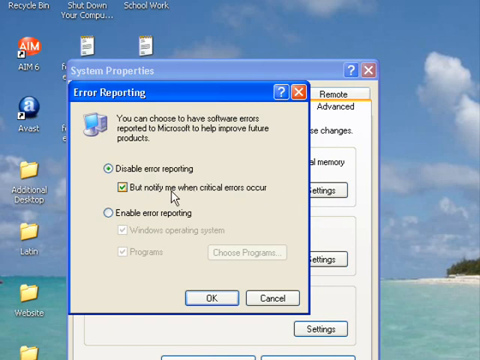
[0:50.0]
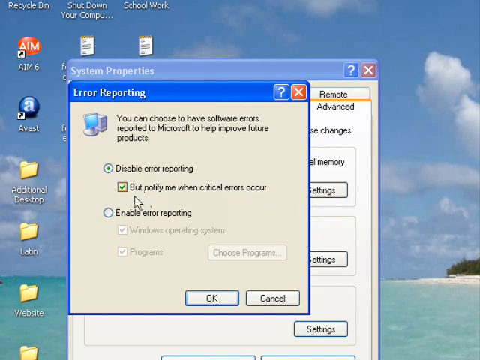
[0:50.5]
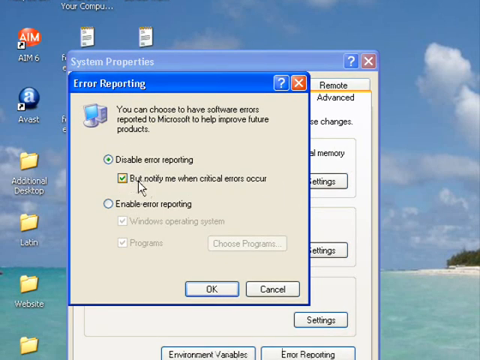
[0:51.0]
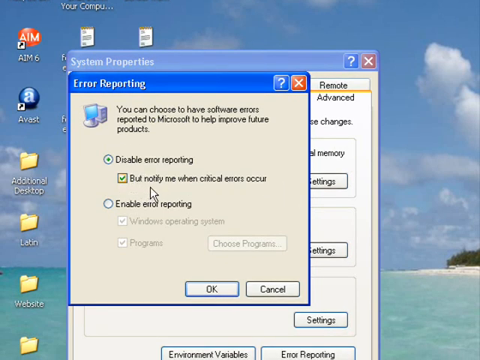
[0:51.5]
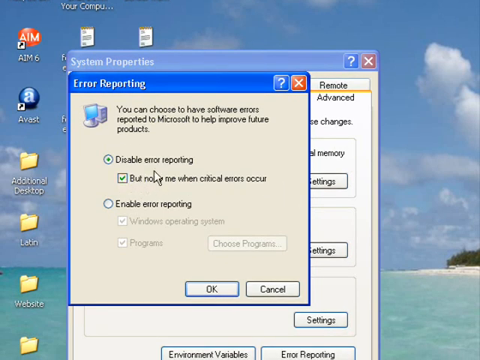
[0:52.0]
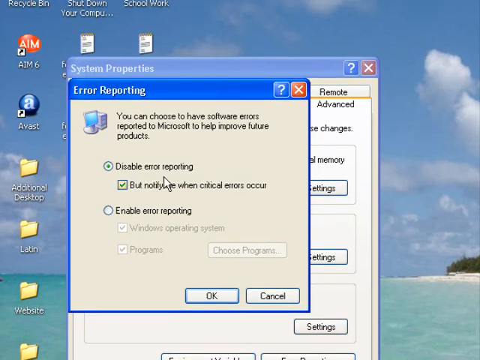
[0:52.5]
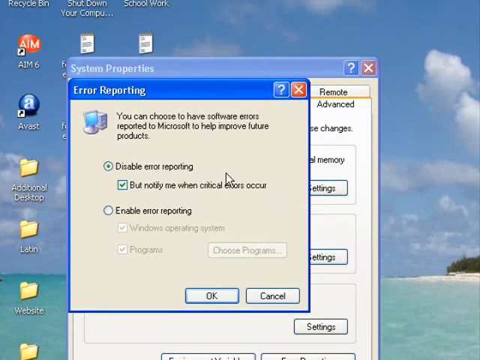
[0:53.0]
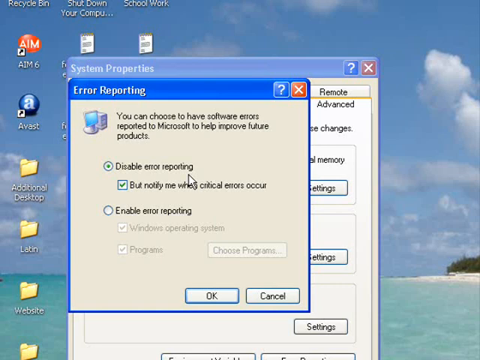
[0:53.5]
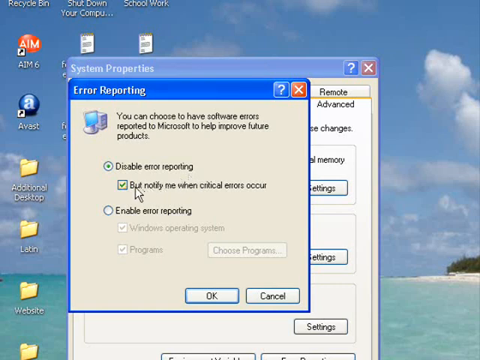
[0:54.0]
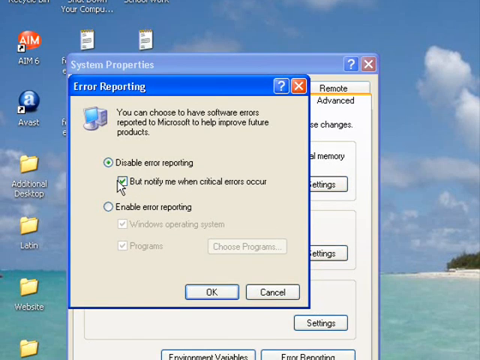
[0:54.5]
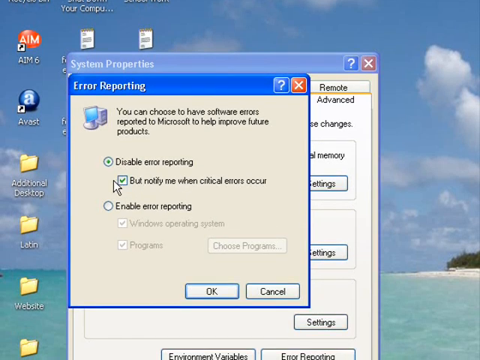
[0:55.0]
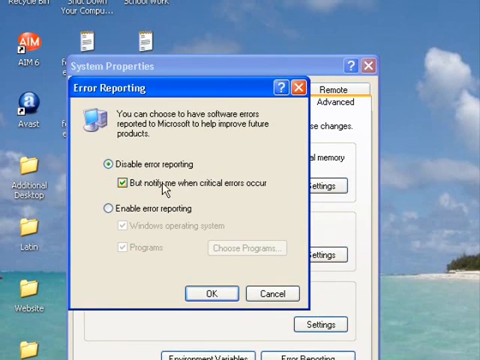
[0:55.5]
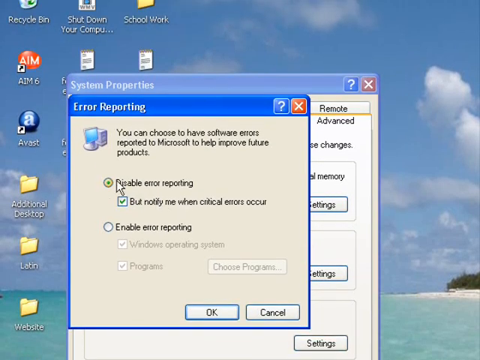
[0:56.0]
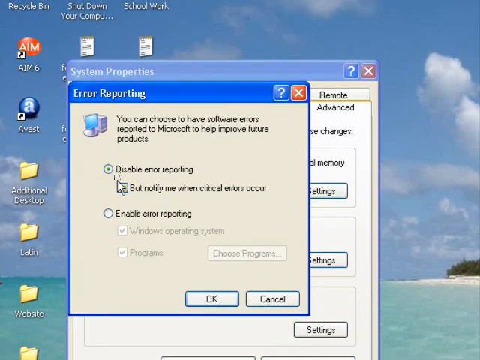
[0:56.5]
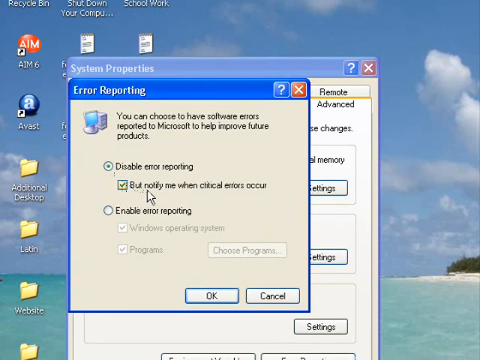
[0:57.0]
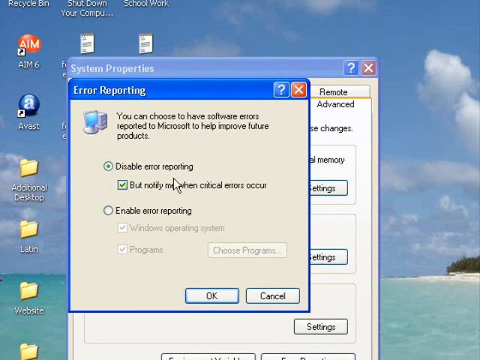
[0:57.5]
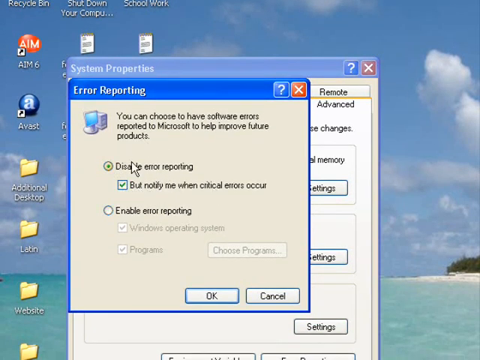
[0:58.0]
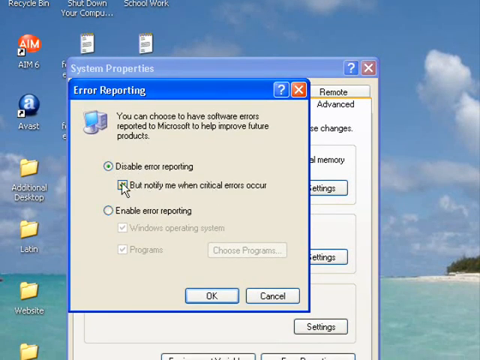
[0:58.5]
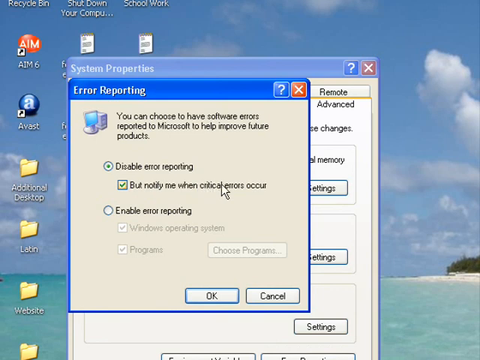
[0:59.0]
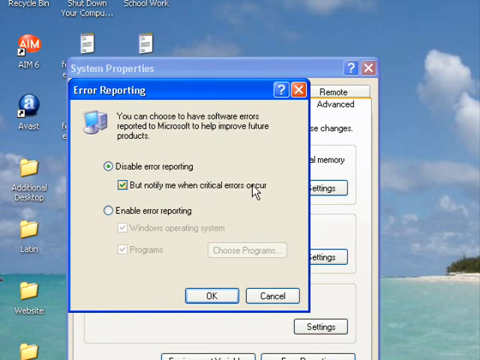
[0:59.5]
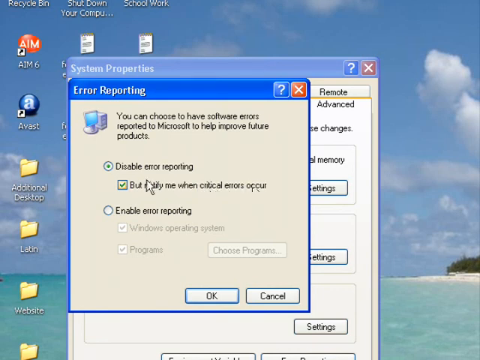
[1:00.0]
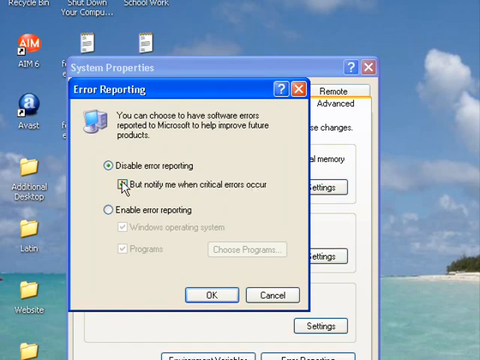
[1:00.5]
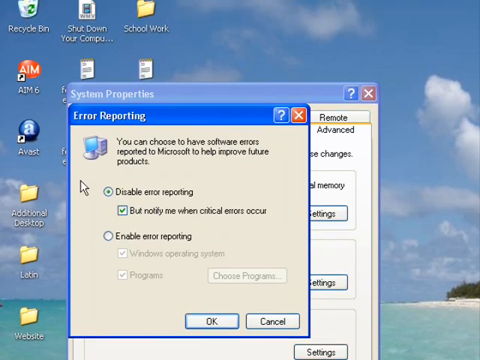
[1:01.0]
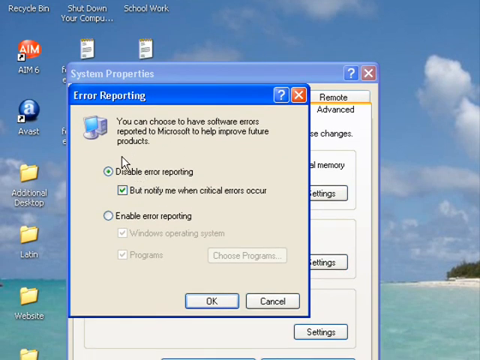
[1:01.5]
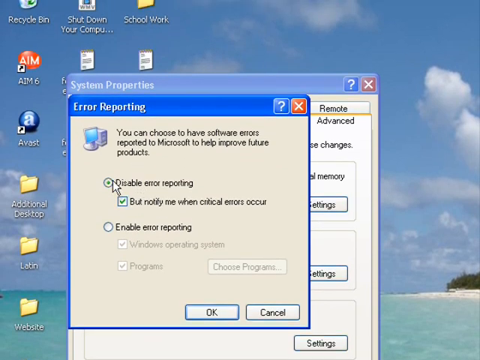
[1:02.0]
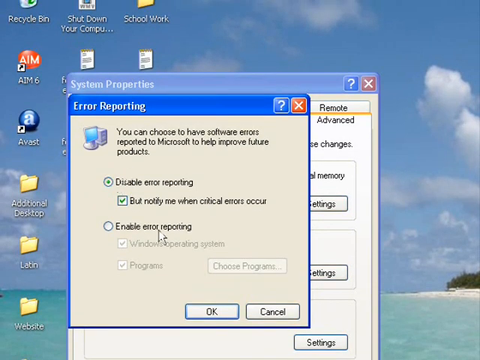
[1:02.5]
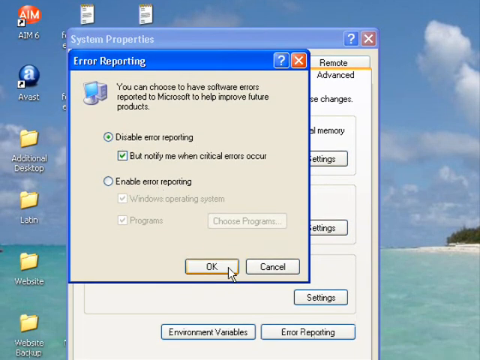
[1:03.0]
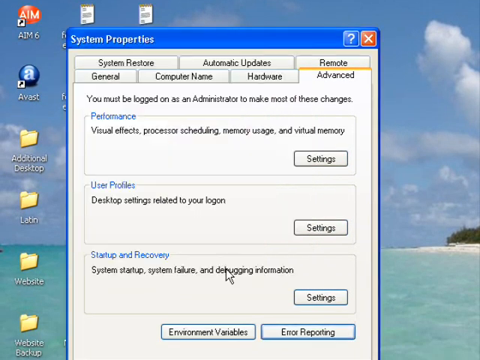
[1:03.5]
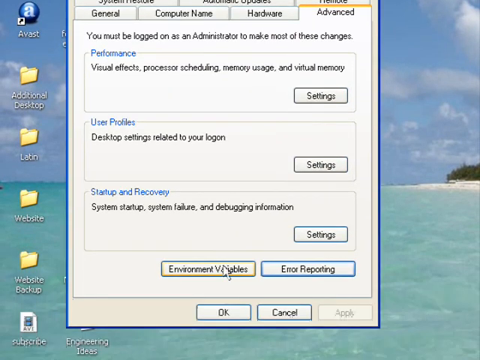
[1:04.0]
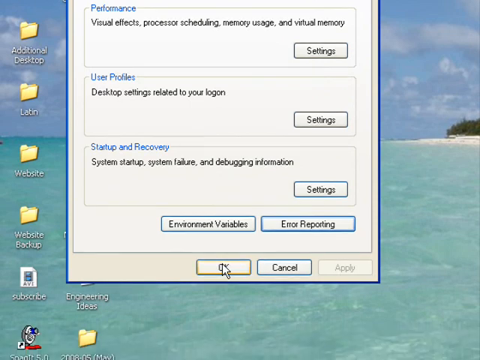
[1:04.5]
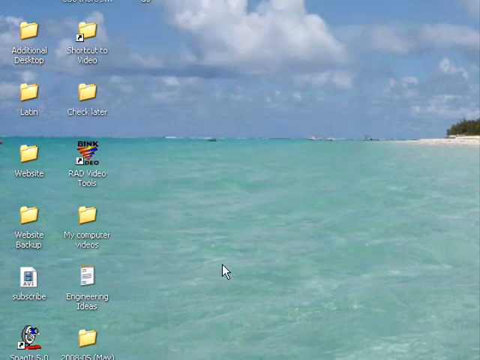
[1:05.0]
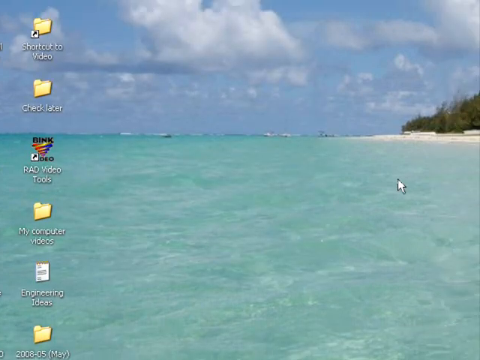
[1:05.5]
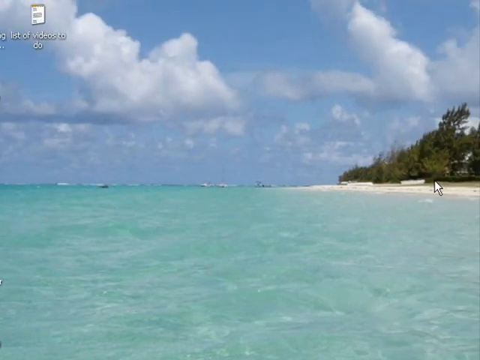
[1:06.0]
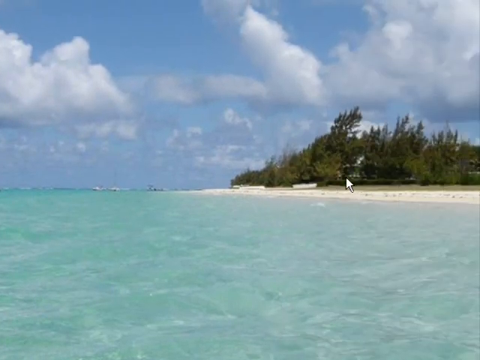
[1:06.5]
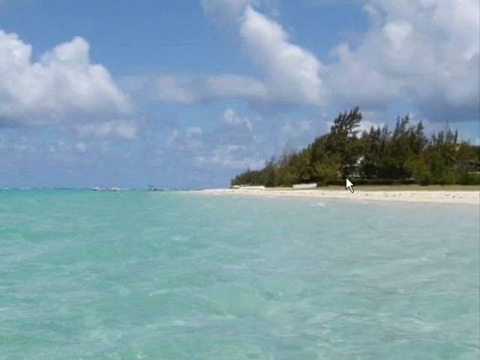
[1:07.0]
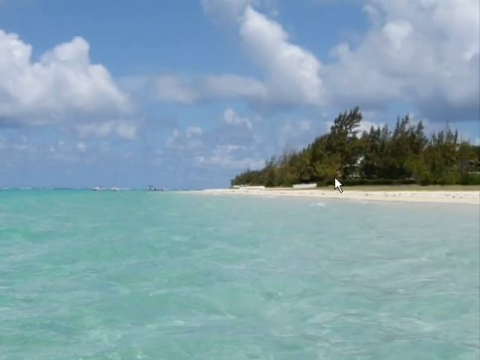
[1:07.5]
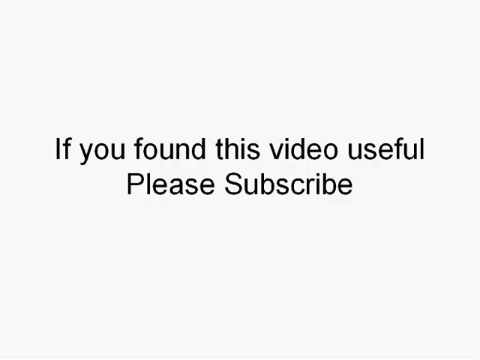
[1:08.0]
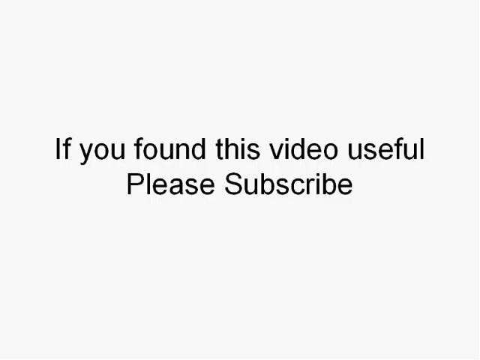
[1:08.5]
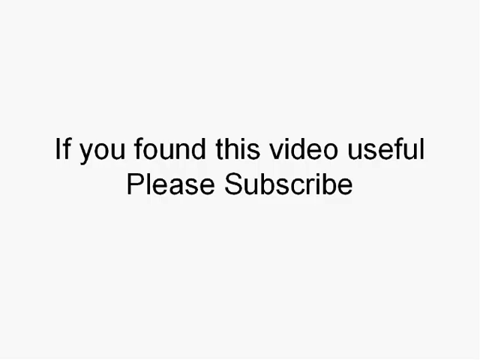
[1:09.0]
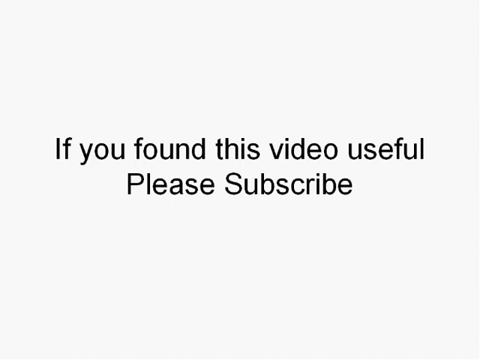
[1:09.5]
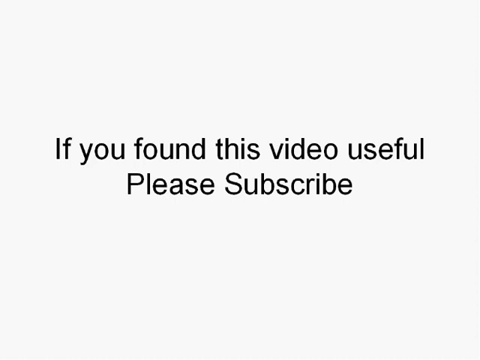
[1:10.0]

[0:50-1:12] The user selects the option to disable error reporting but notify of critical errors, then exits and returns to Vortex, going from the error reporting submenu back to his desktop. After closing it, he scrolls across his video, which then cuts to an ending segment that appears to be edited in Windows Movie Maker. It shows either a black background with white text or a white background with black text, reading "if this video helped you, please subscribe", thanking the viewer for watching and asking them to subscribe. The video is possibly a tutorial for a tech-related YouTube channel.